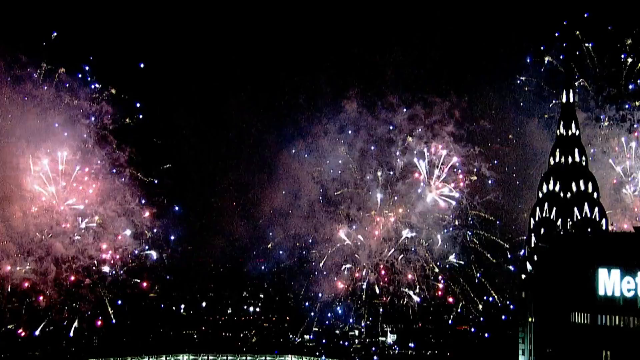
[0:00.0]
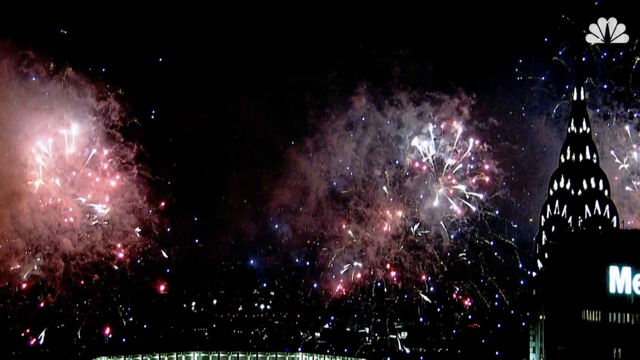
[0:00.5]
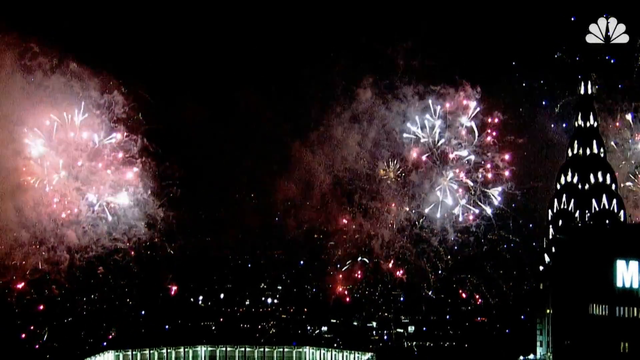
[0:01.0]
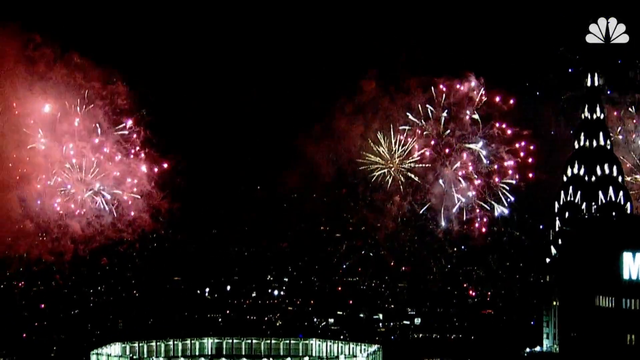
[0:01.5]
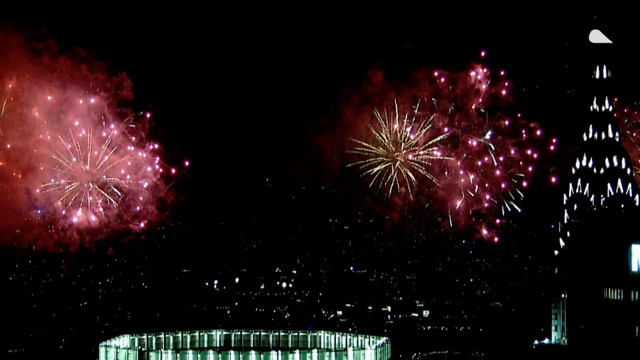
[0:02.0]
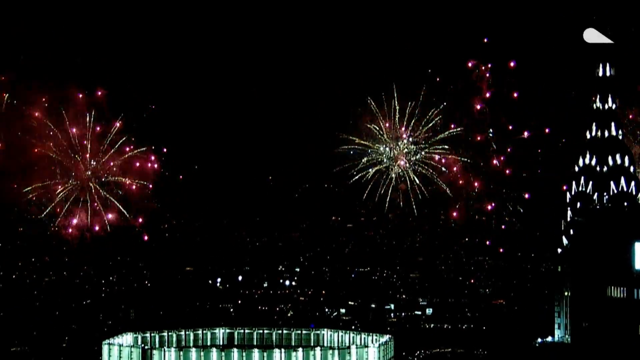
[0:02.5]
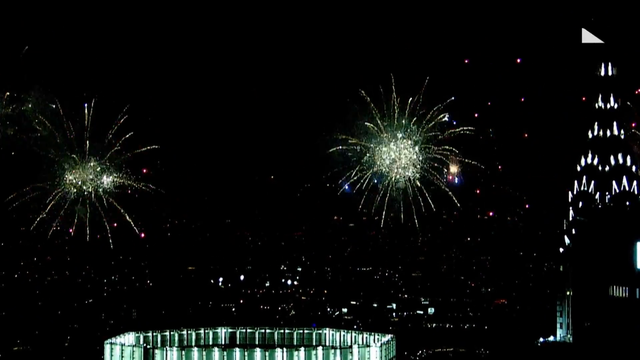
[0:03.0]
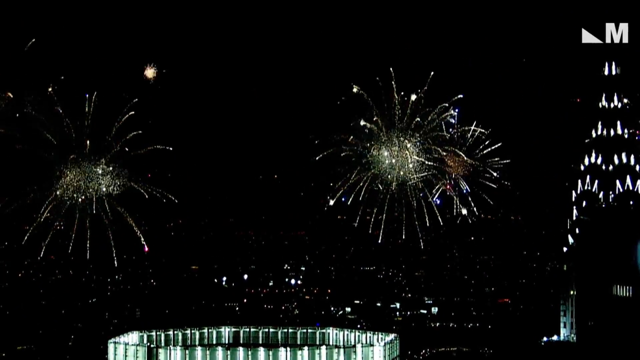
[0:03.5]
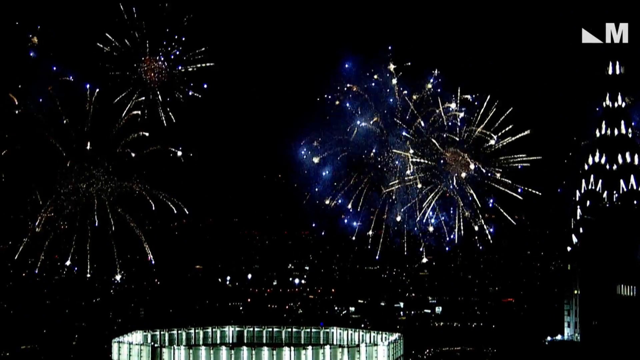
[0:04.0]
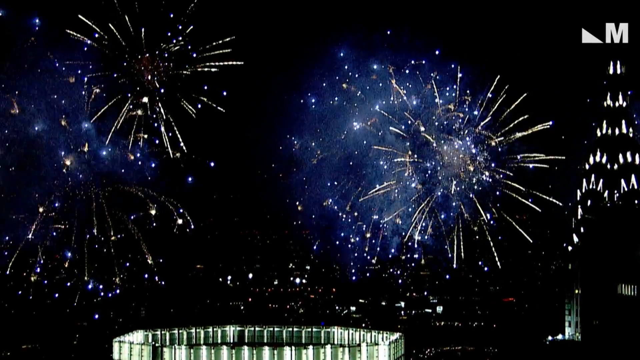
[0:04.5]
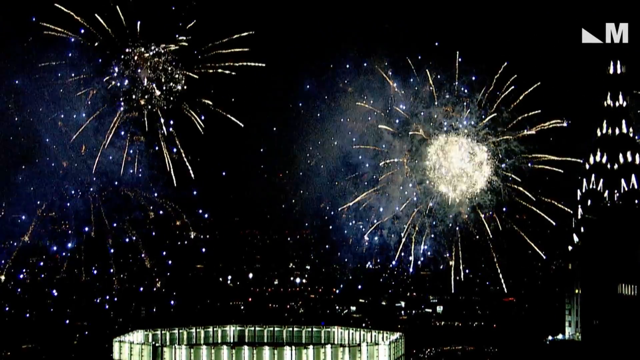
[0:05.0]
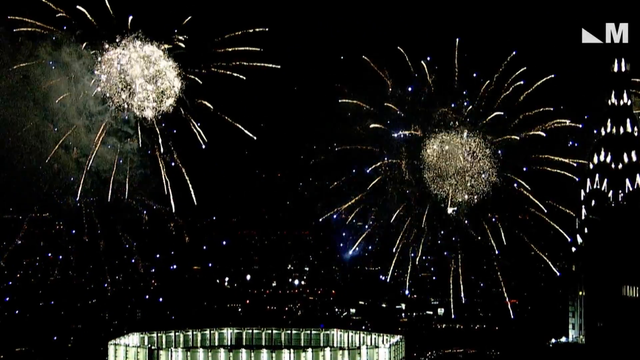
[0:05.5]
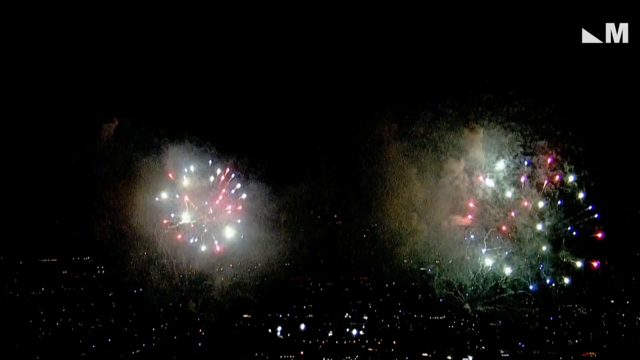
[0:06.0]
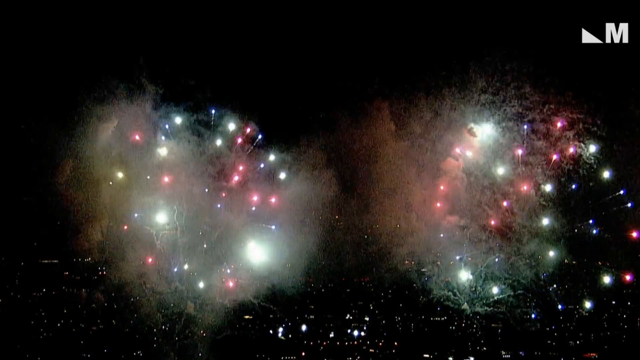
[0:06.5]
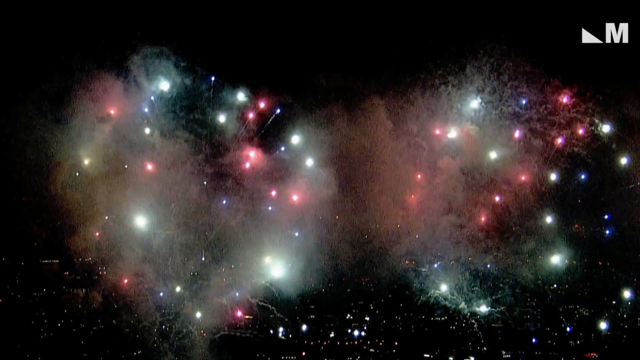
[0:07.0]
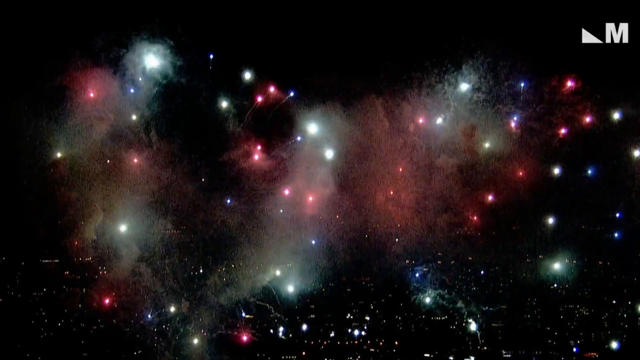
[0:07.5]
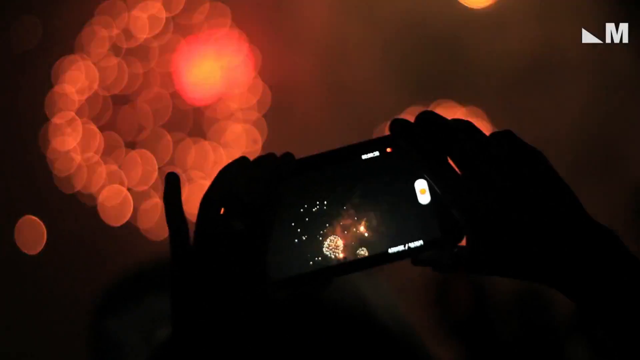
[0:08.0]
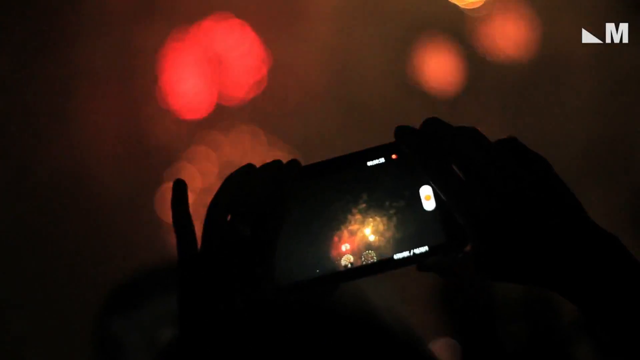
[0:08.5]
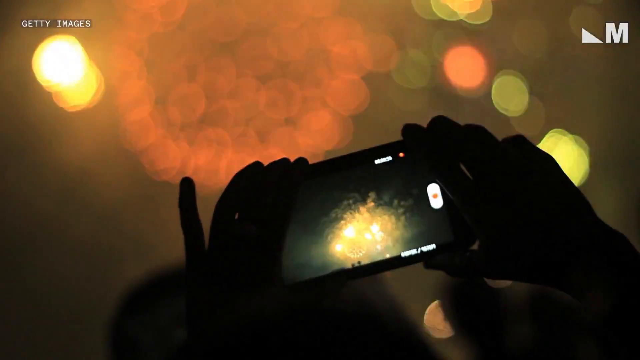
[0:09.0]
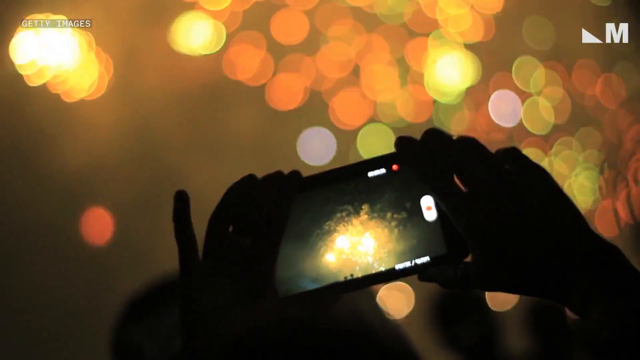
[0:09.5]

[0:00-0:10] Several fireworks go off. The main firework is yellowish, and around it reds, blues and another colour are also exploding. Some green fireworks are set off at the same time. Two hands hold a phone, recording the fireworks. The fireworks go off four times, and there are three different areas where fireworks are being tested. As they explode, the fireworks release a burst of colours that are vivid against the black skyline.